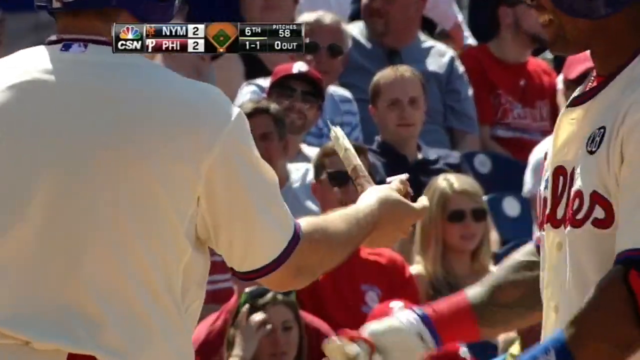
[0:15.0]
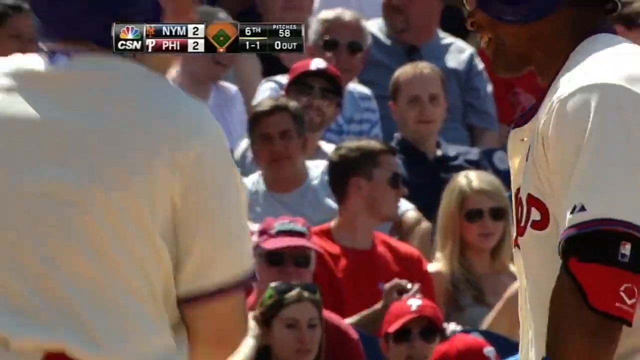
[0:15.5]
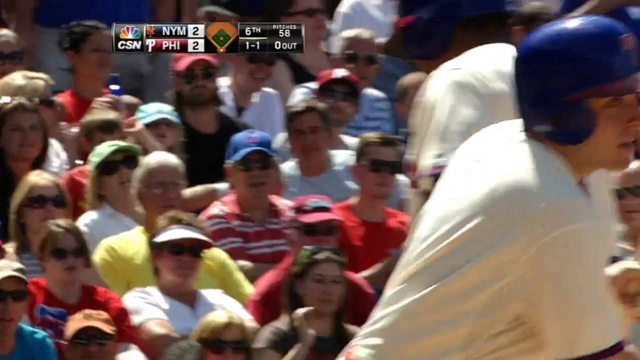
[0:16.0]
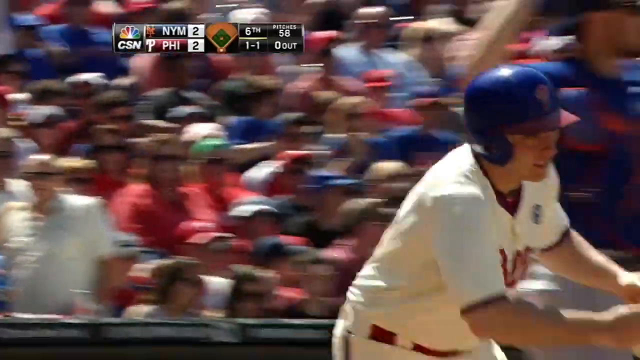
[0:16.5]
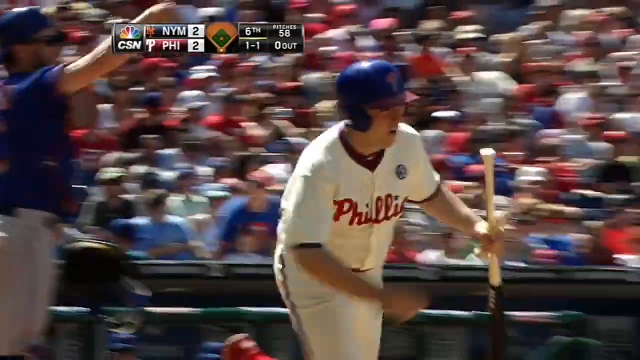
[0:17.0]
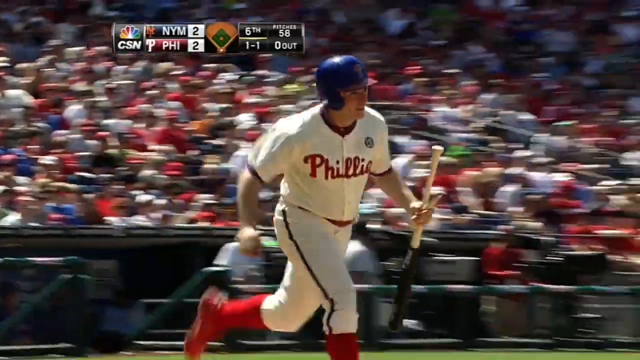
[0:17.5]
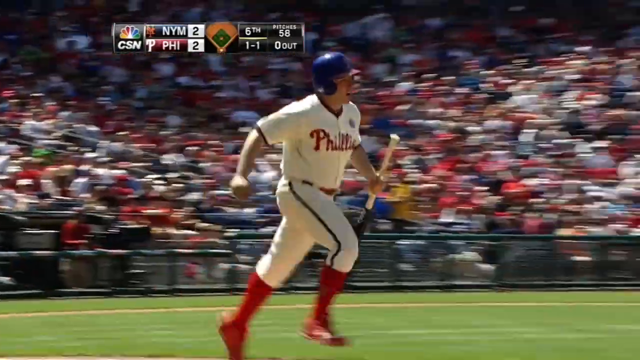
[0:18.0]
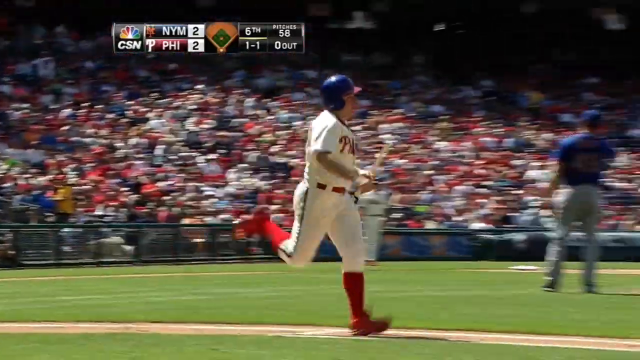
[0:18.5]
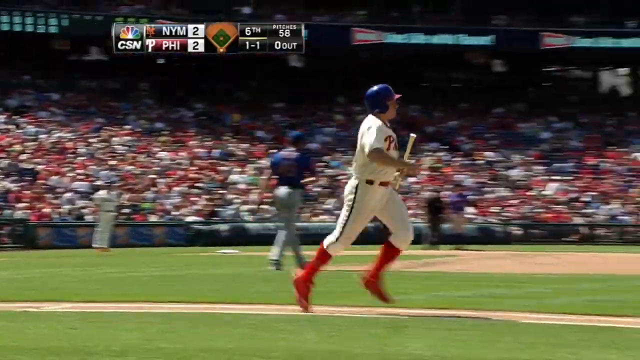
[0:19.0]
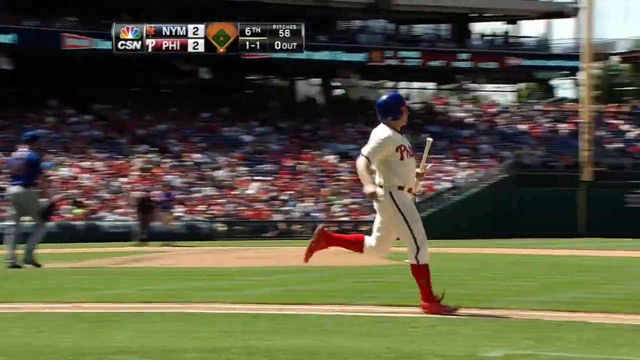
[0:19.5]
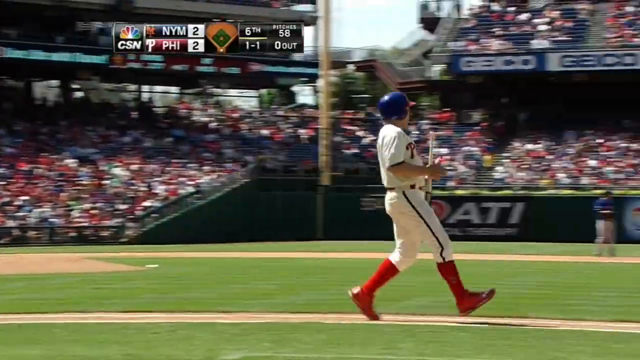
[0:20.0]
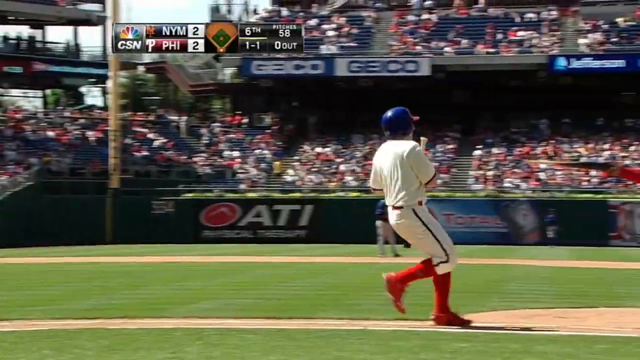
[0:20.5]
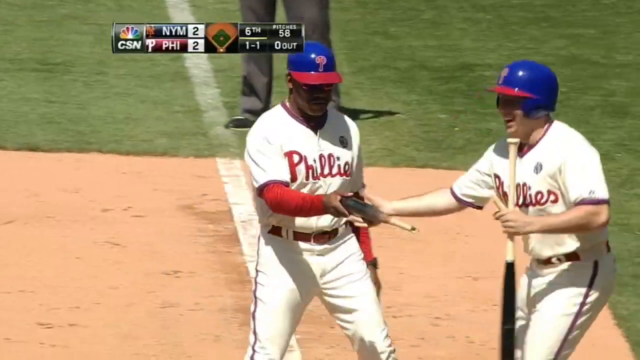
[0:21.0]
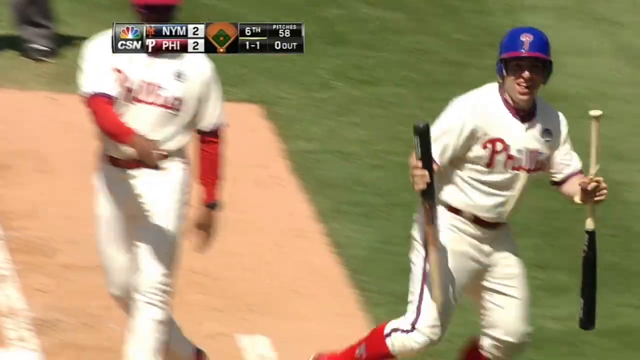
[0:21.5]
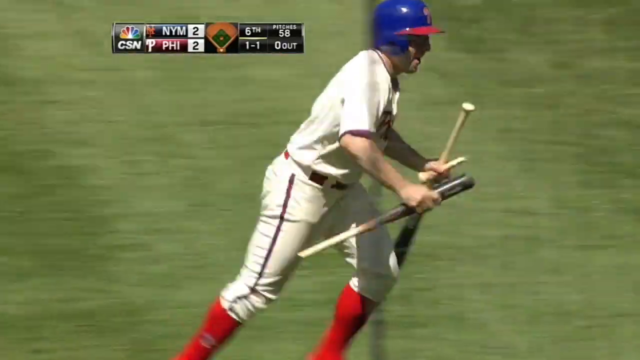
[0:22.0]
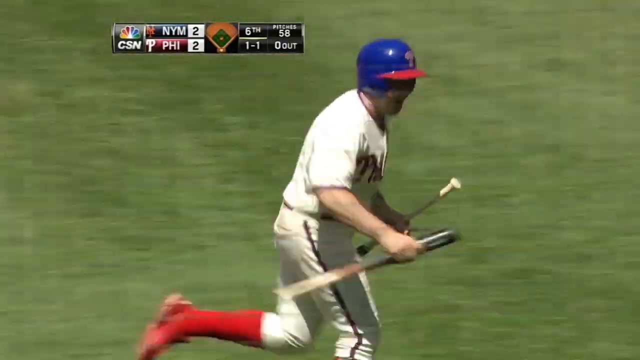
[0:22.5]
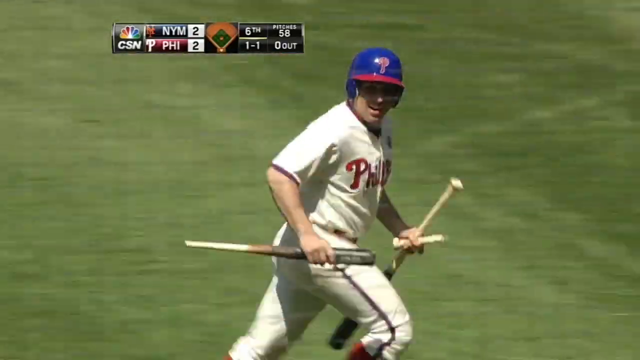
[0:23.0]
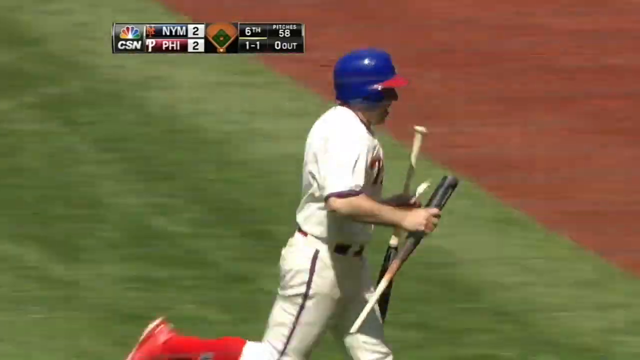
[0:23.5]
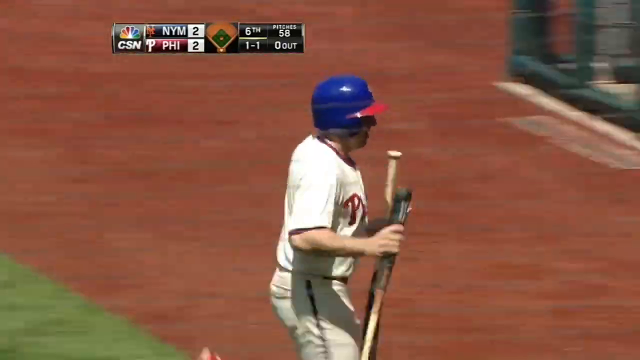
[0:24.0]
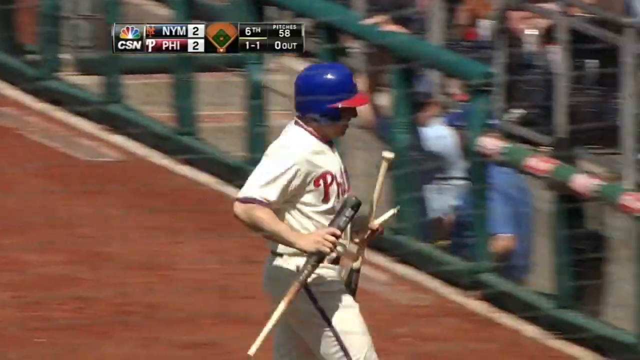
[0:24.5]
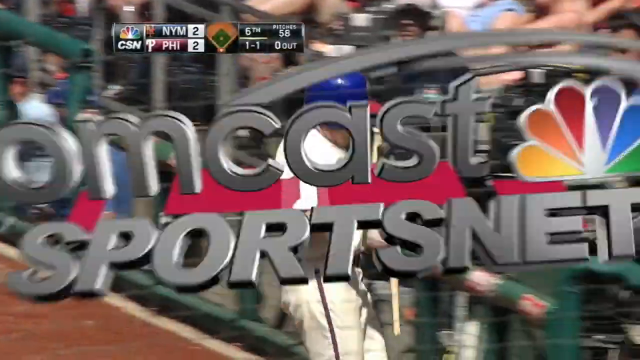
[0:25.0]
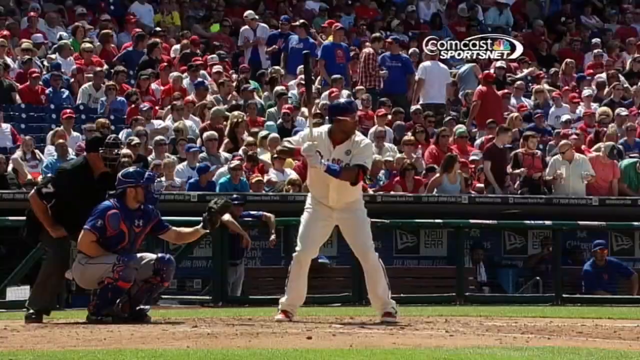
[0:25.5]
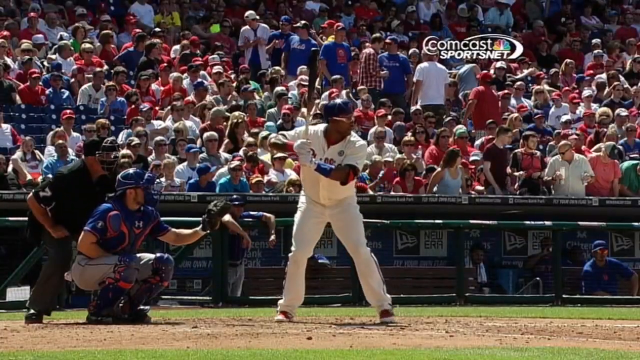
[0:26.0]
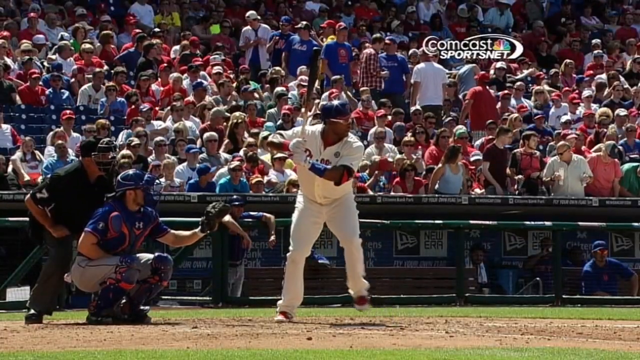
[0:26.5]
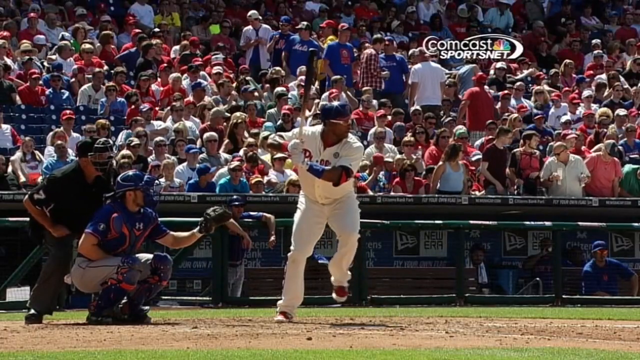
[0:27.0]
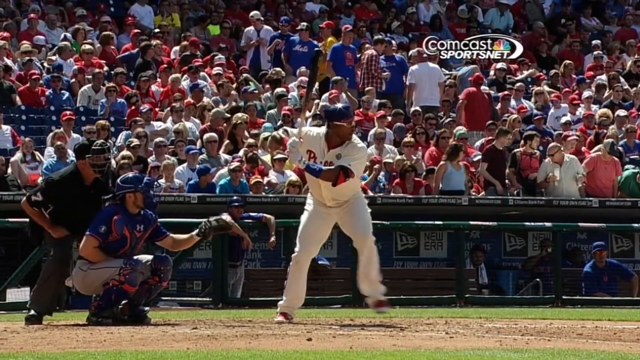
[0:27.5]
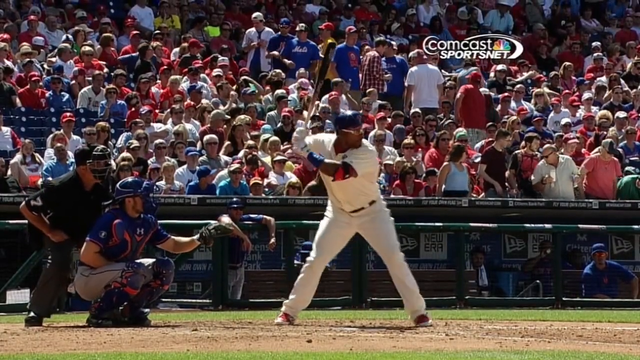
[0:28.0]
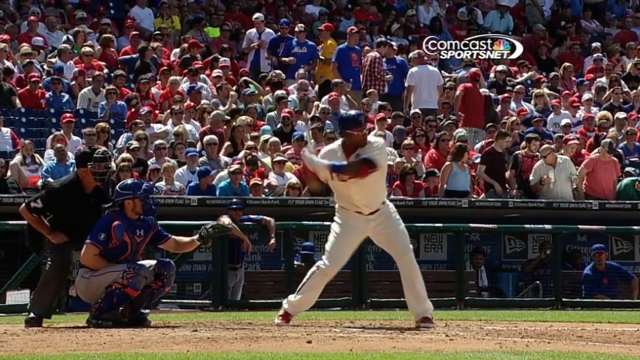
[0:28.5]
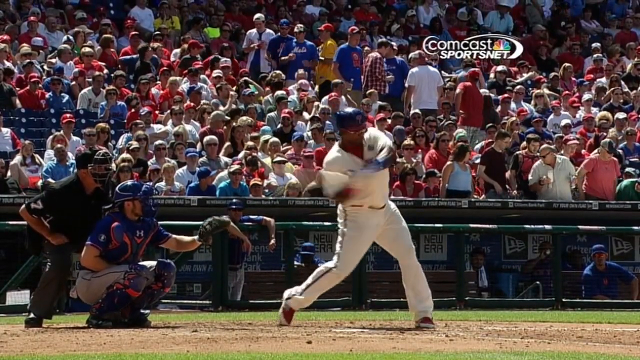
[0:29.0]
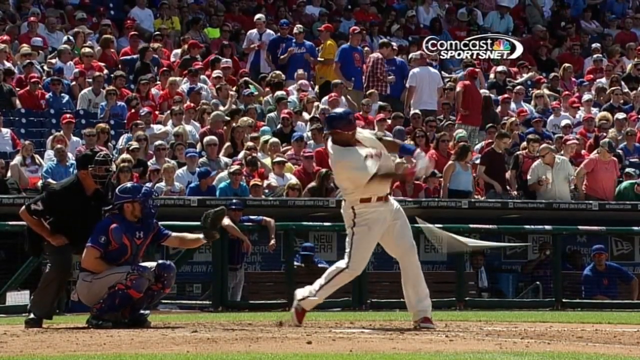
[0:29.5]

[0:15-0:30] The Phillies bat boy, wearing red socks and red shoes, first runs over to first base and grabs the top half of the broken bat from the first baseman. Holding the bottom half of the broken bat, the top half and an extra bat, he runs back to the dugout. A slow-motion replay follows from the perspective of the first baseman, giving a side view of what happened: the ball comes through, and although it is hard to say whether the batter hit it, it looks like he does not, and the bat breaks. Text at the top of the video shows the score at 2-2, the sixth inning and a 1-1 count. The batter who swung and missed has the number 8 on his jersey.